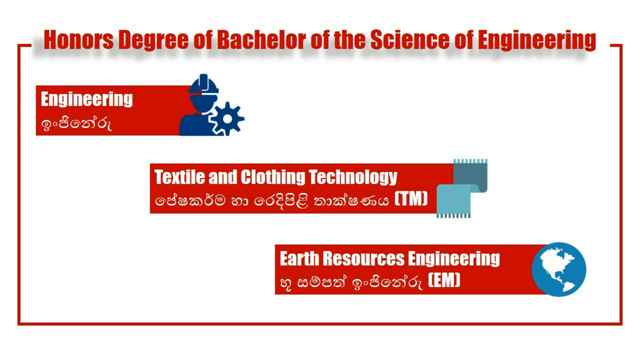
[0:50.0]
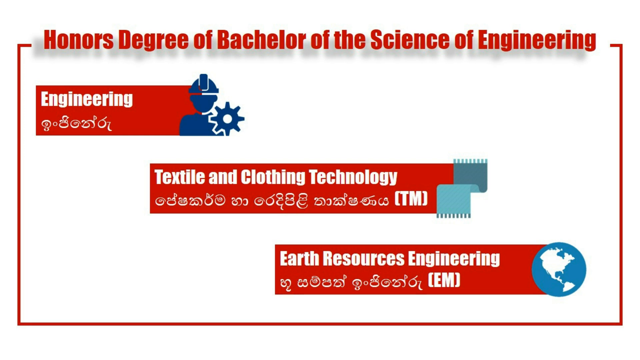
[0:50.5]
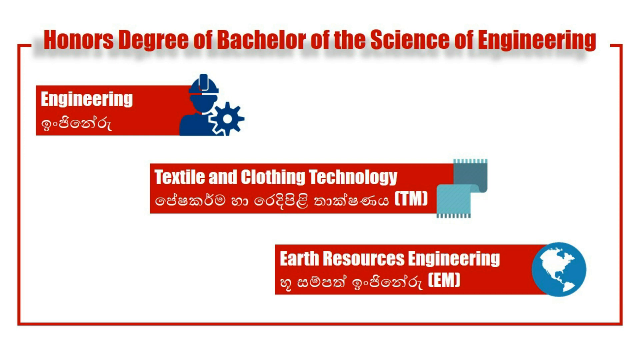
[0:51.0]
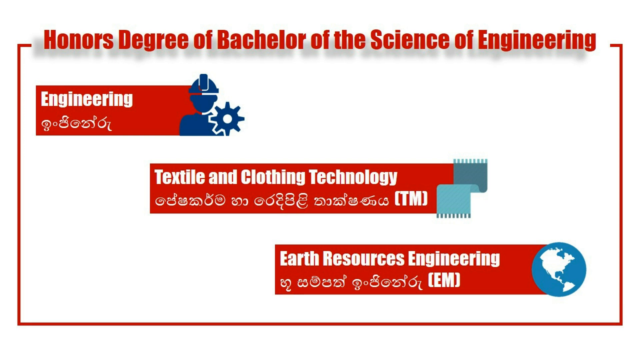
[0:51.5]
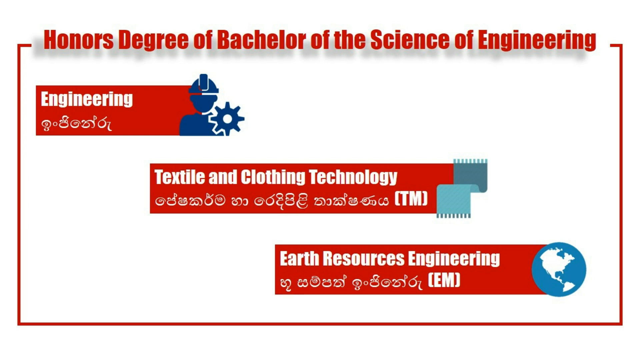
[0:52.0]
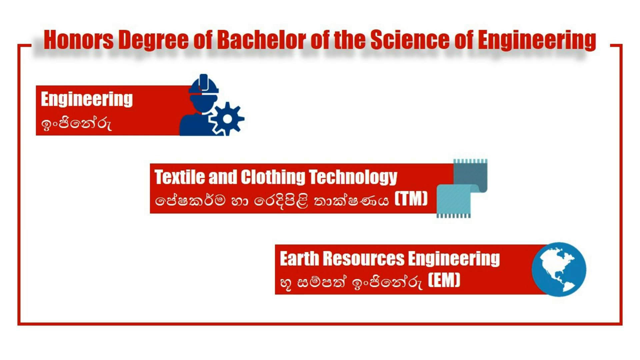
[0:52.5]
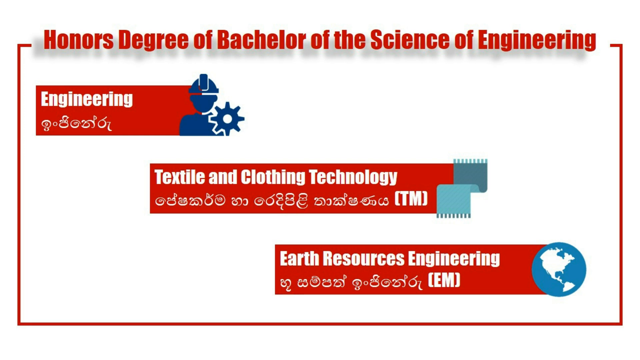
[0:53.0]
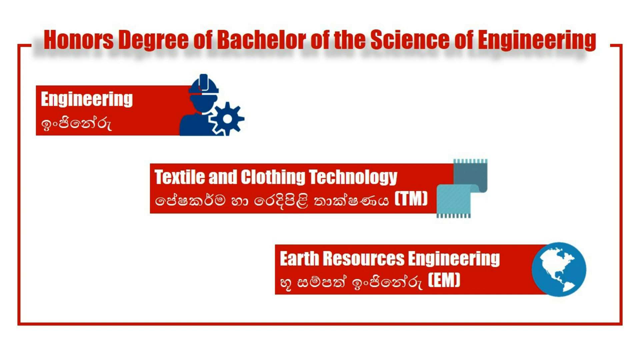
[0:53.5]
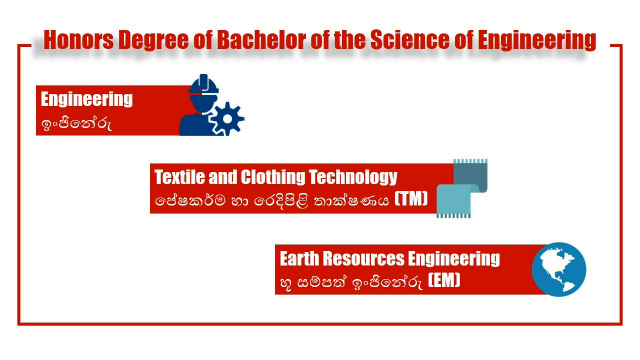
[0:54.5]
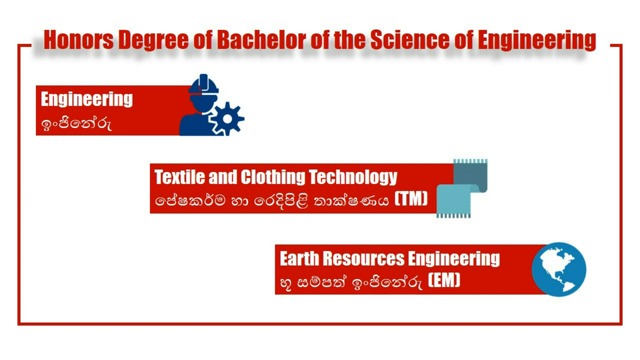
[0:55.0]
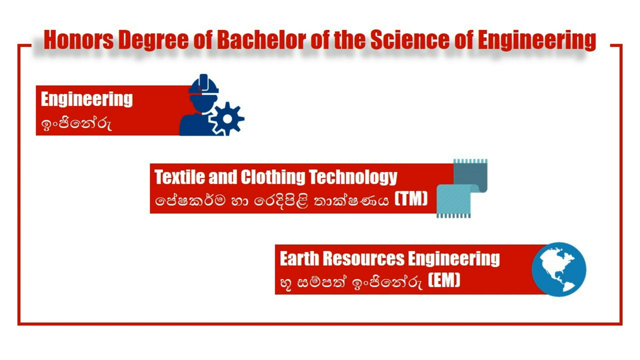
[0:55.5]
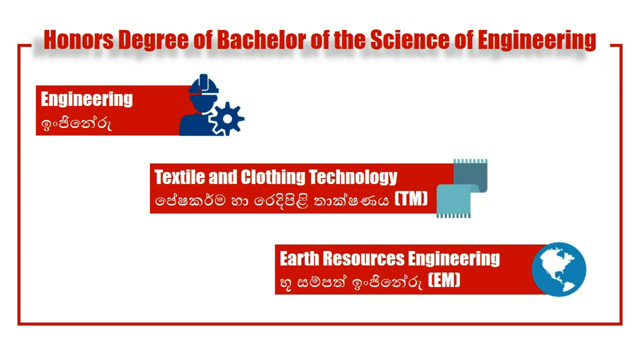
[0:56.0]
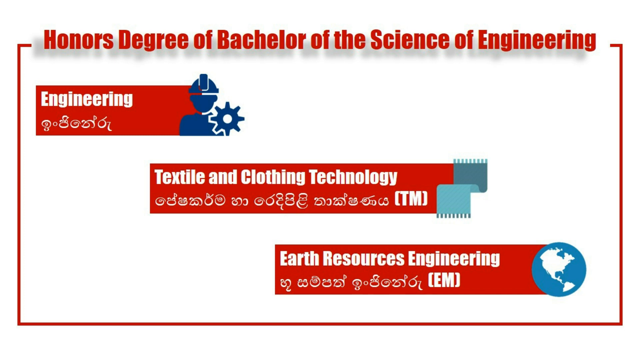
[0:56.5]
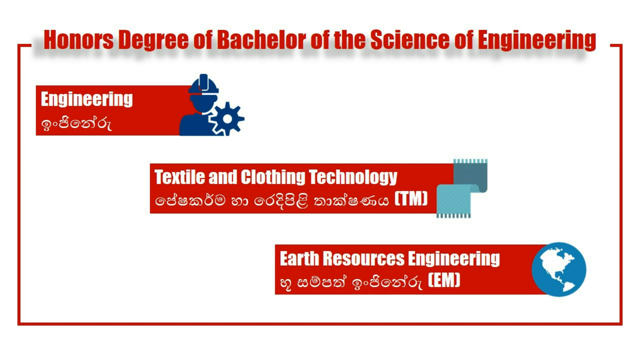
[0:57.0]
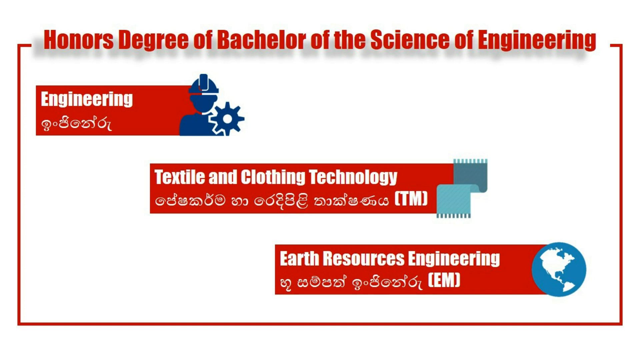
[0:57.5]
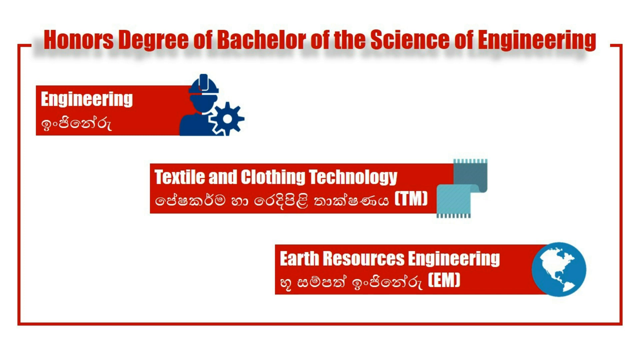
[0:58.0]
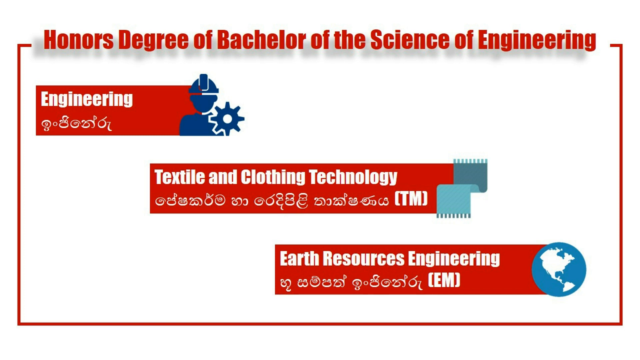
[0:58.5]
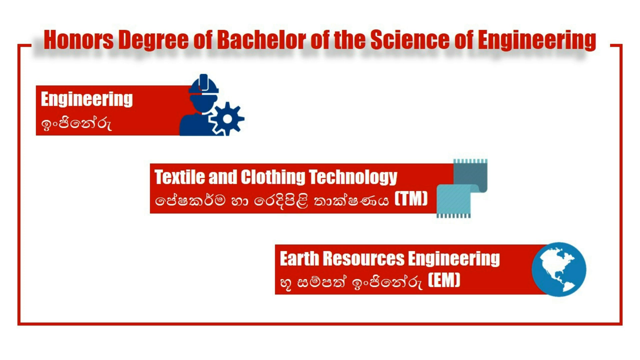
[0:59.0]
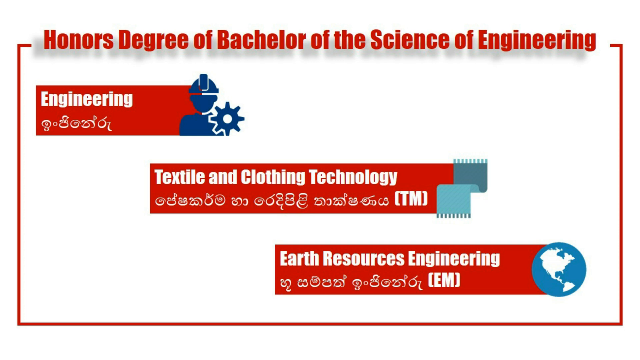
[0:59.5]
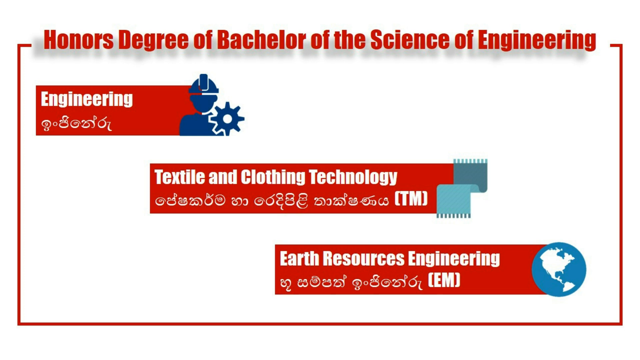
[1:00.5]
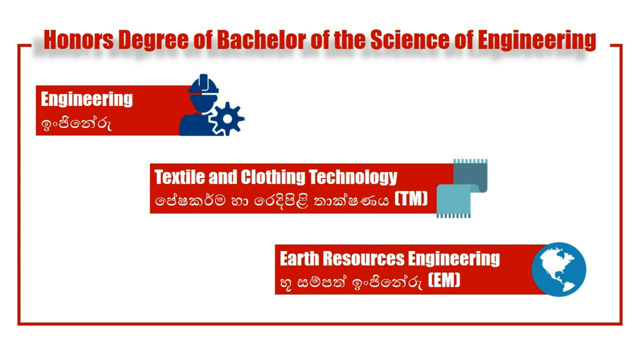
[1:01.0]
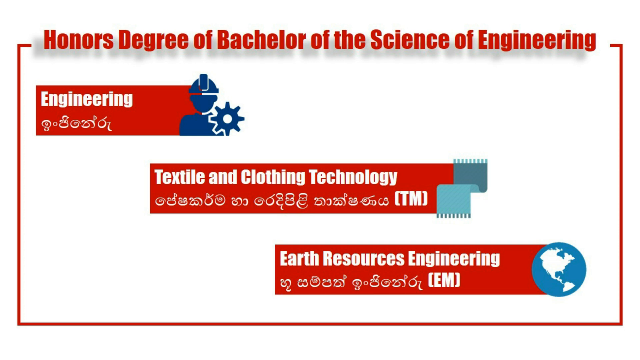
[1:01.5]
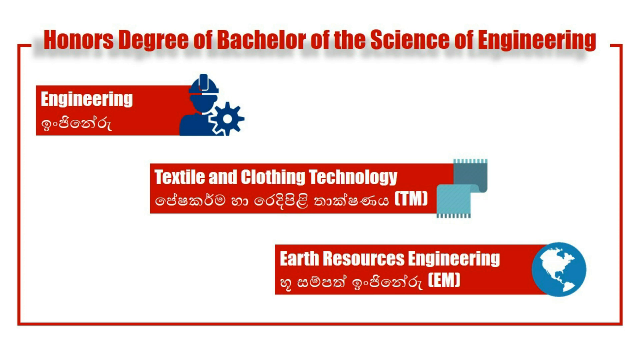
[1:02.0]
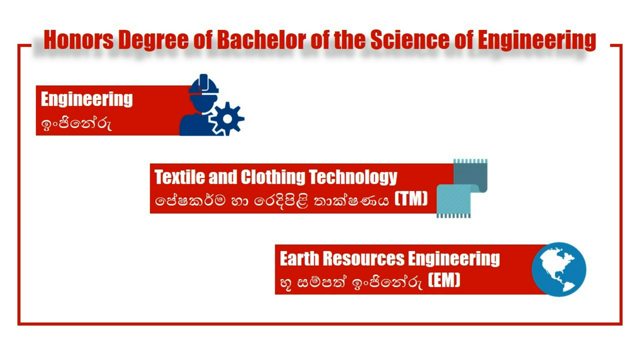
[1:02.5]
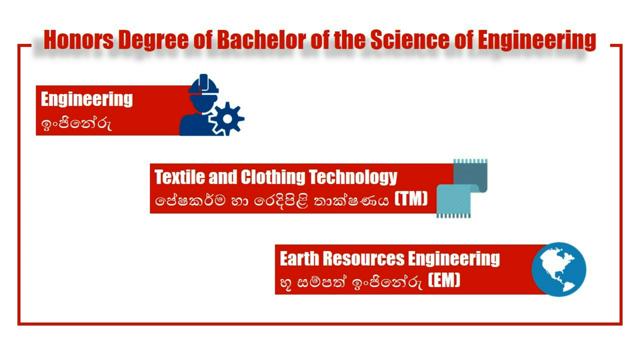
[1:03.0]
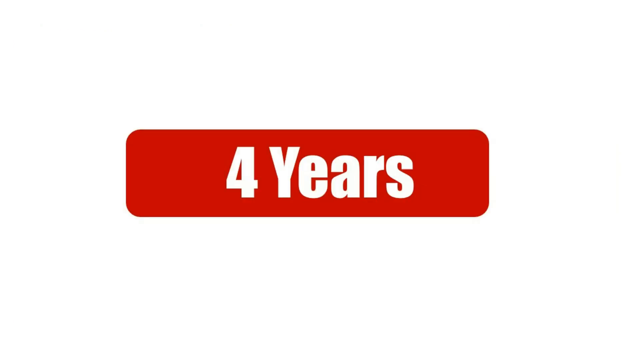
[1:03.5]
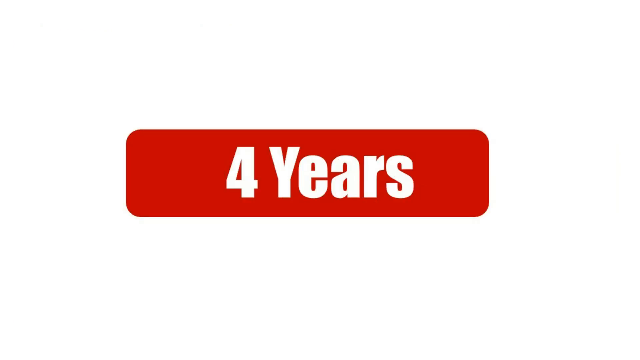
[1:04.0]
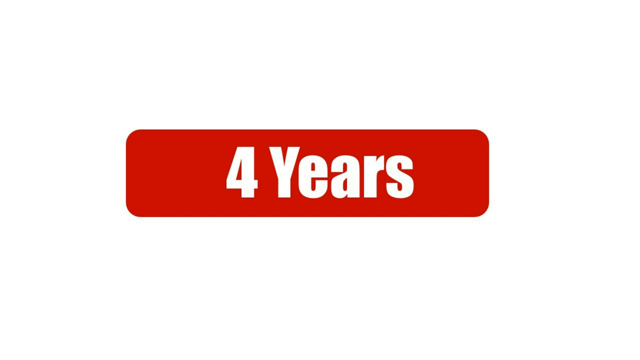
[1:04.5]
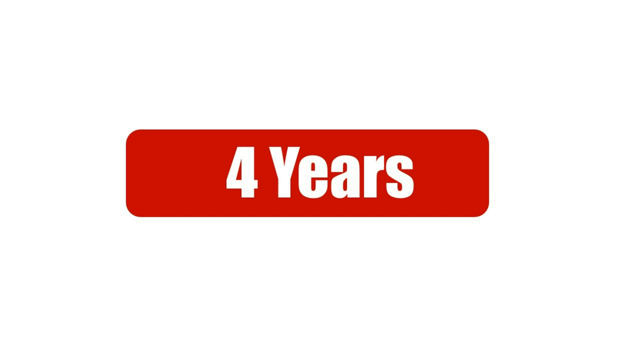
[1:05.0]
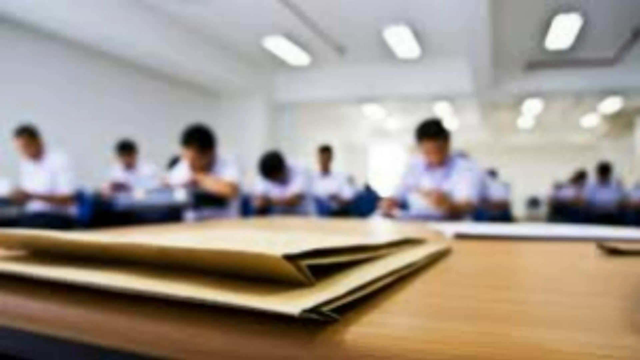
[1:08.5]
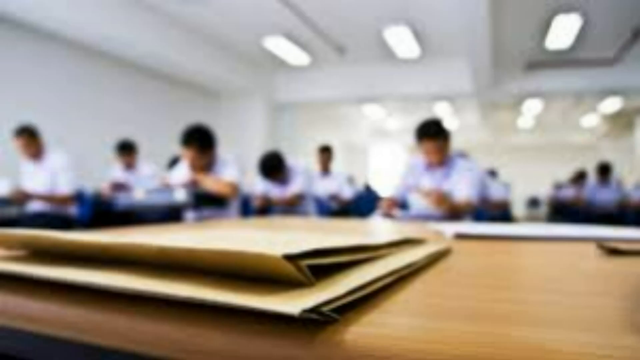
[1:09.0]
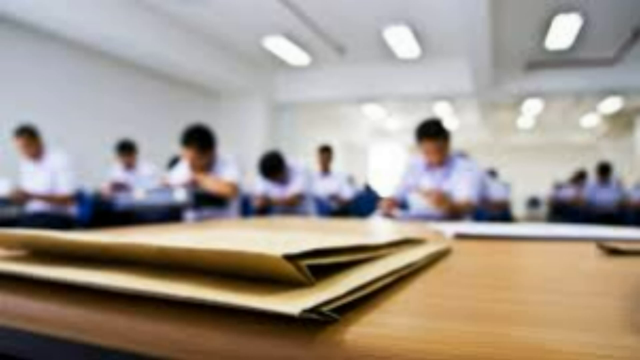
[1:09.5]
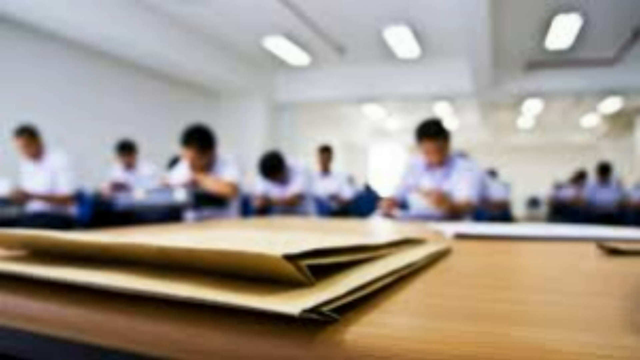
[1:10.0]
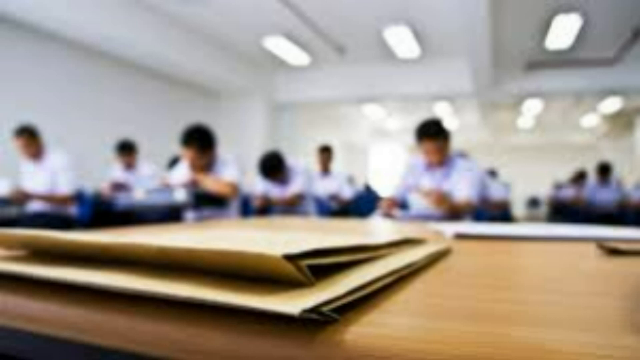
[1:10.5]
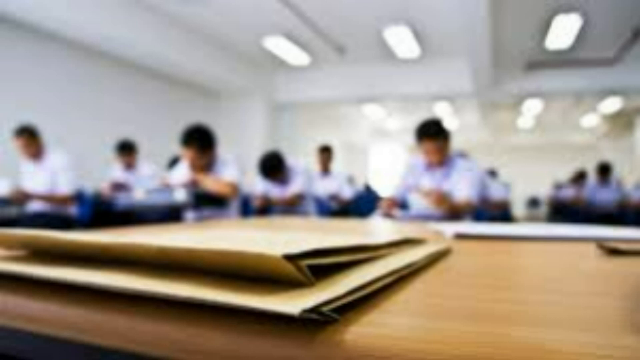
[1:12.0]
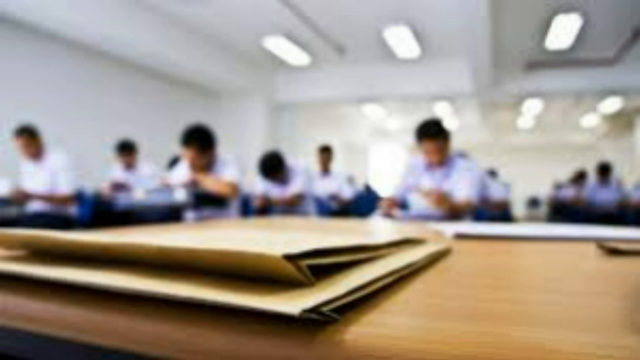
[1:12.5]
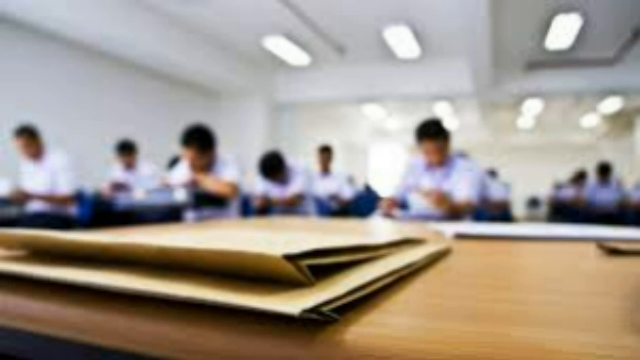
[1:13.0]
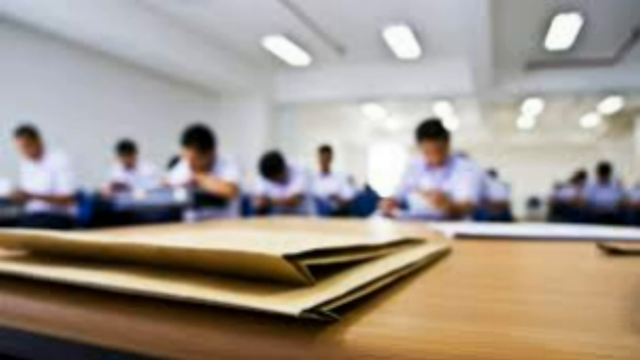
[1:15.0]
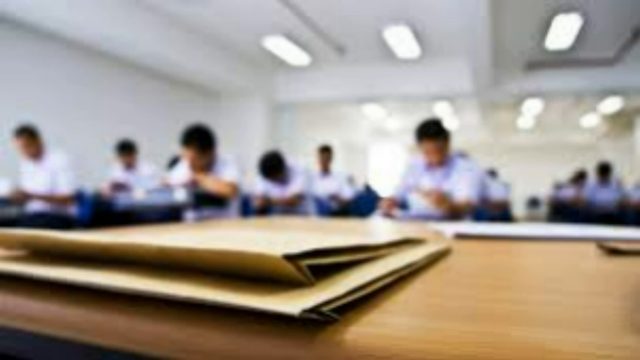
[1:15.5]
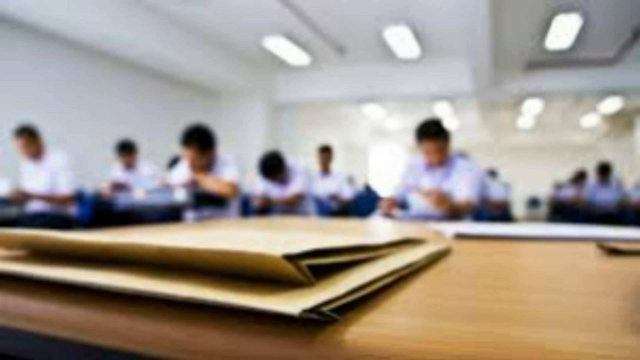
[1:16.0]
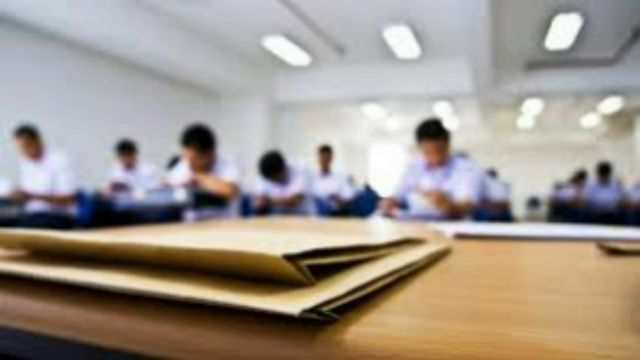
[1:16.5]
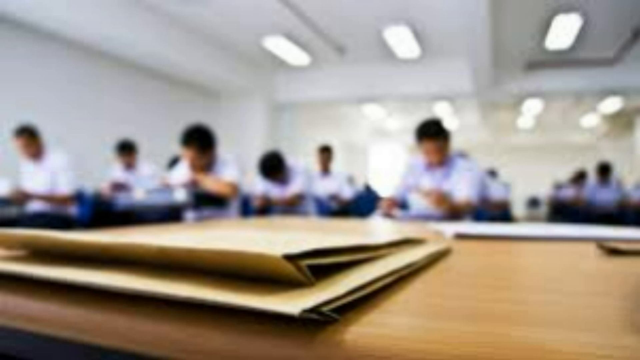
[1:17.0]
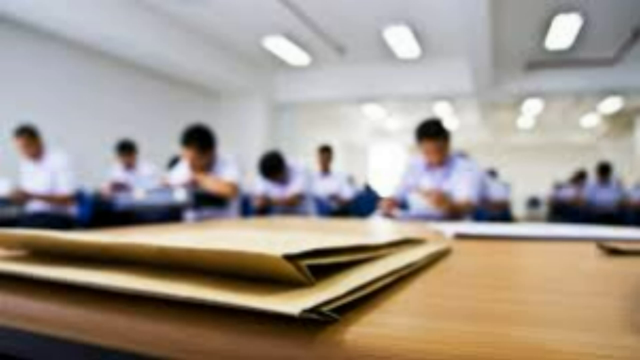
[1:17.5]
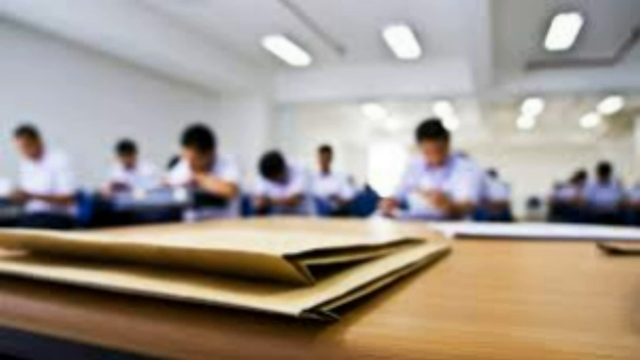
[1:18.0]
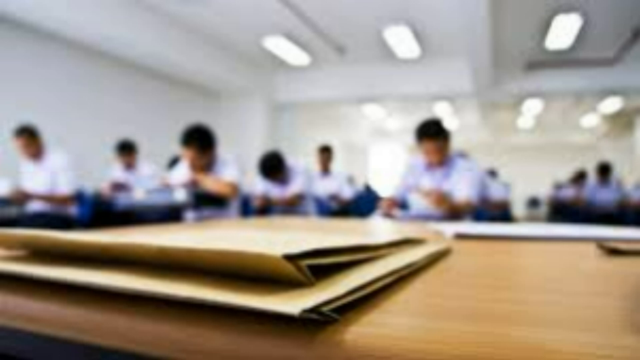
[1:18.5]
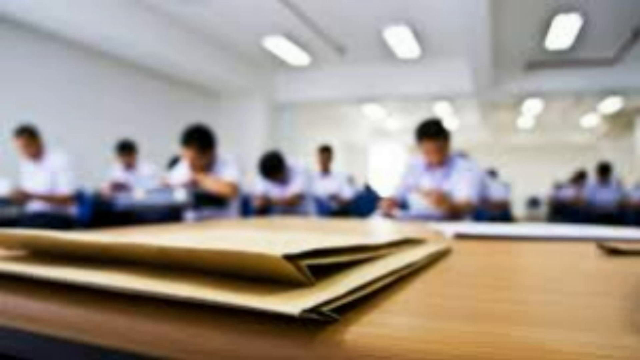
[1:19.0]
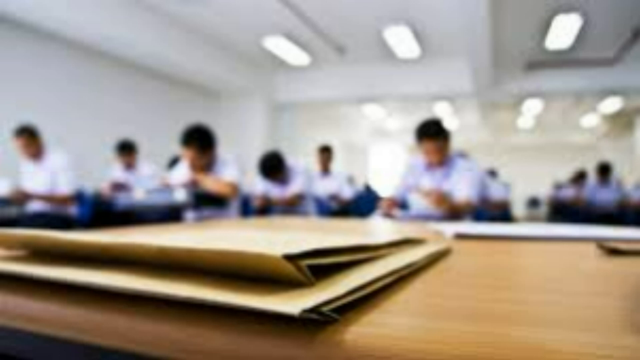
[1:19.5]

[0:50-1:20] The red "engineering" box sits right underneath the title, roughly under the "h" of "honors," a little off to the right. Its icon includes a settings gear like the one on a computer, part of a shield, and what looks like some kind of pot on the bottom with a lid on top. The textile box has a trademark symbol and parentheses, and to its right is what almost looks like a teal scarf. The other box has a blue and white globe. Then "four years" appears centered in the middle in a red box with white writing. Next is a picture of some people, apparently college level. The ceiling above them has rectangular halogen lights. They are sitting at tables, seemingly two at each table, and right in front are two packets of some kind of documents on a table. They are working at their desks looking down, and they all wear light blue short-sleeve shirts.